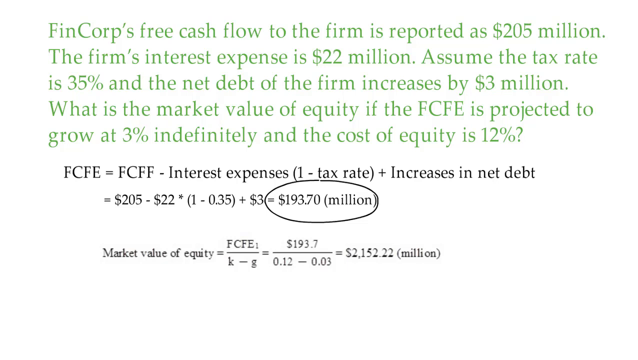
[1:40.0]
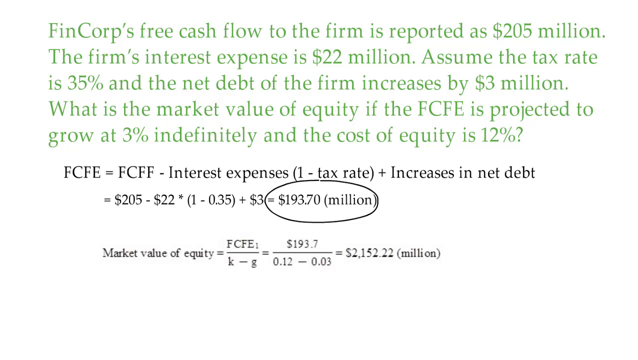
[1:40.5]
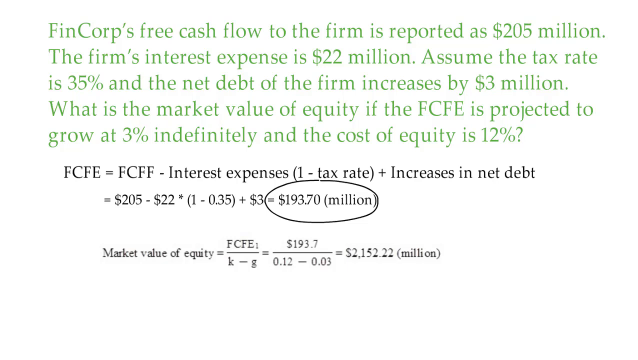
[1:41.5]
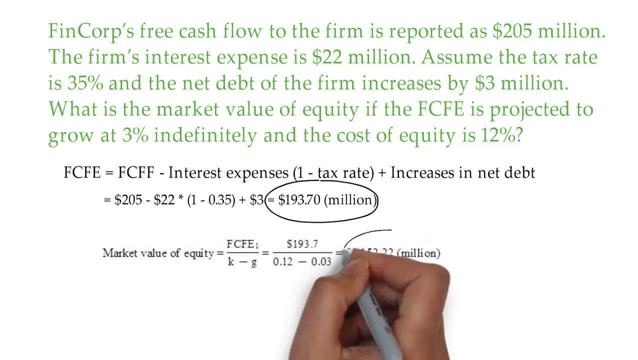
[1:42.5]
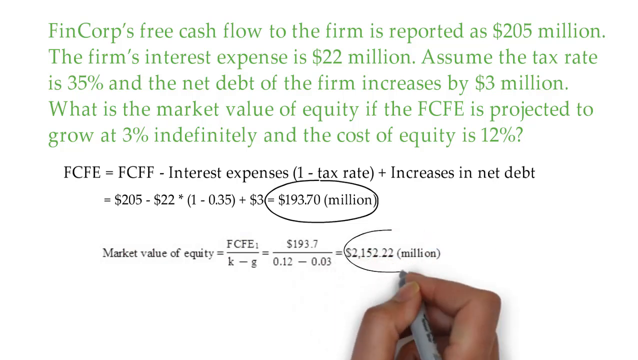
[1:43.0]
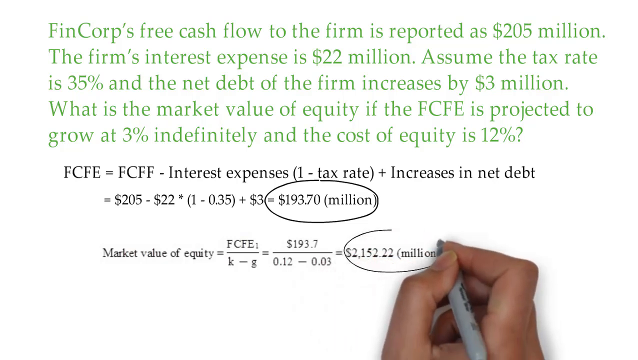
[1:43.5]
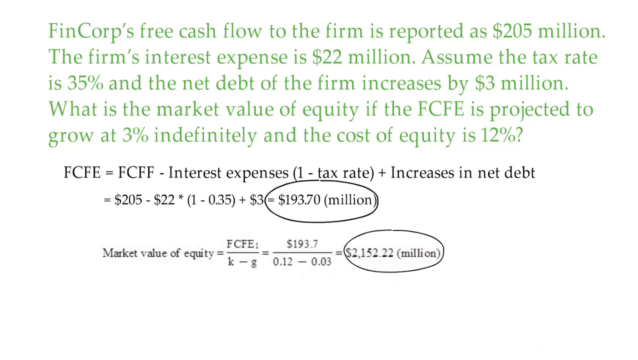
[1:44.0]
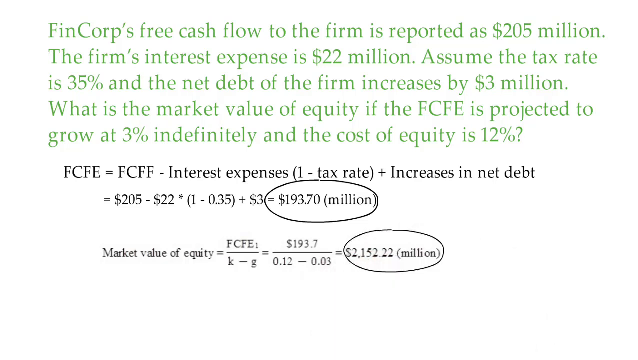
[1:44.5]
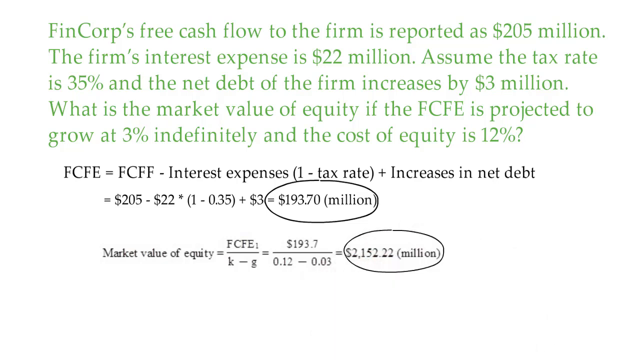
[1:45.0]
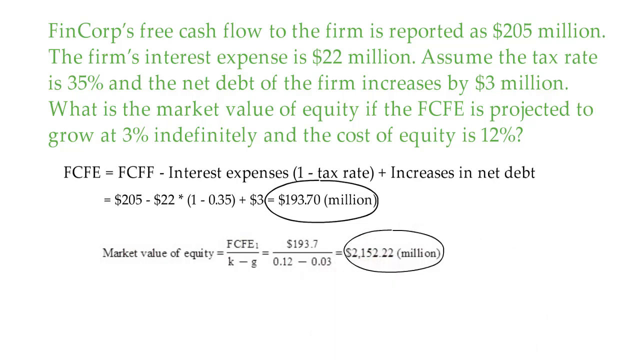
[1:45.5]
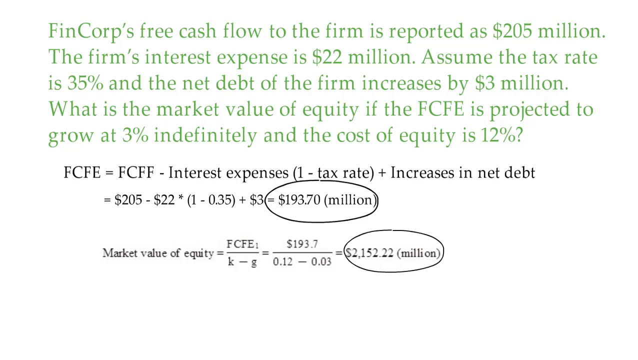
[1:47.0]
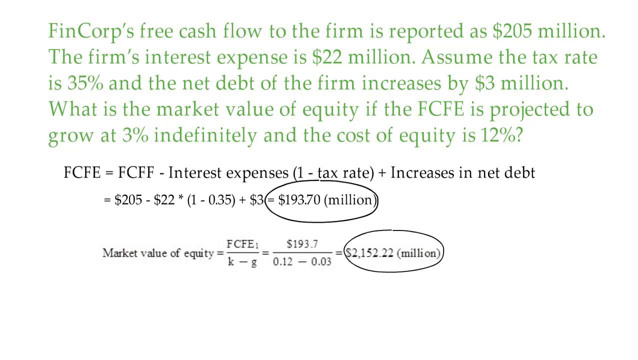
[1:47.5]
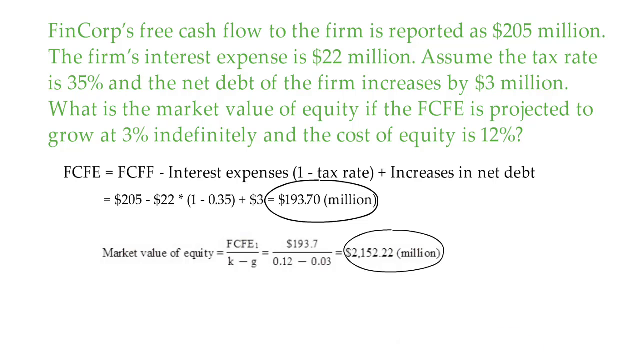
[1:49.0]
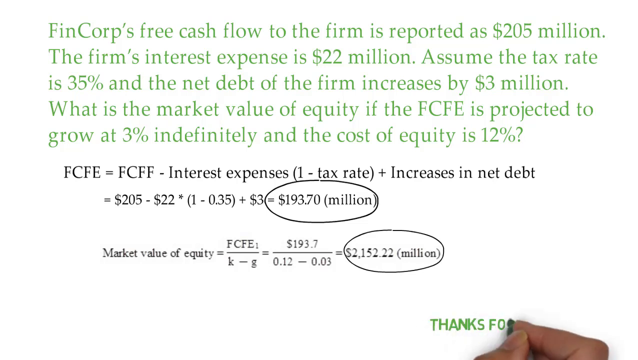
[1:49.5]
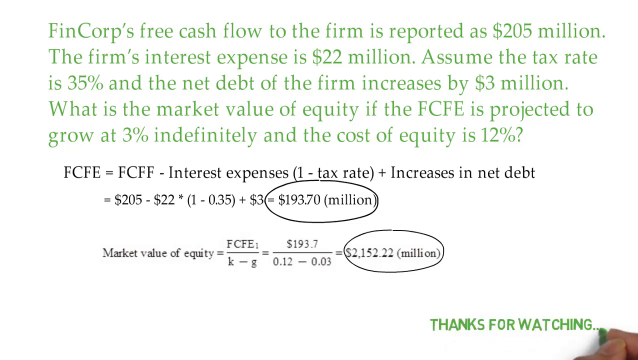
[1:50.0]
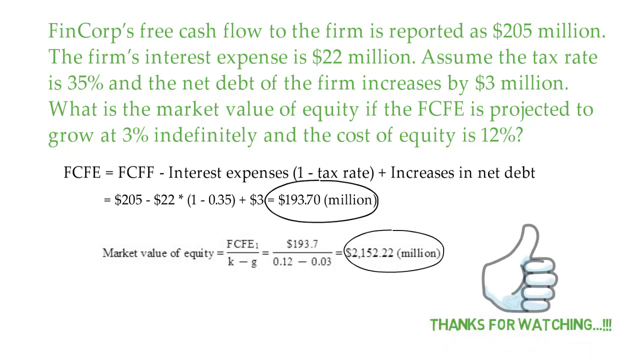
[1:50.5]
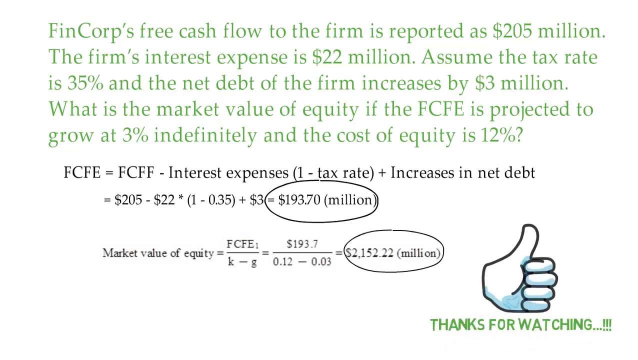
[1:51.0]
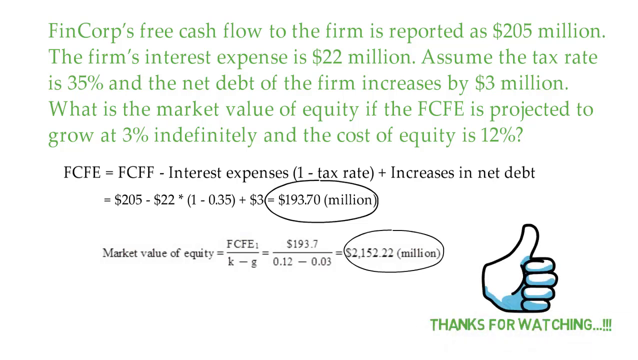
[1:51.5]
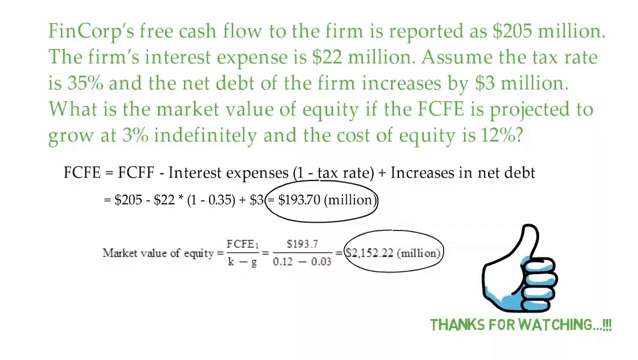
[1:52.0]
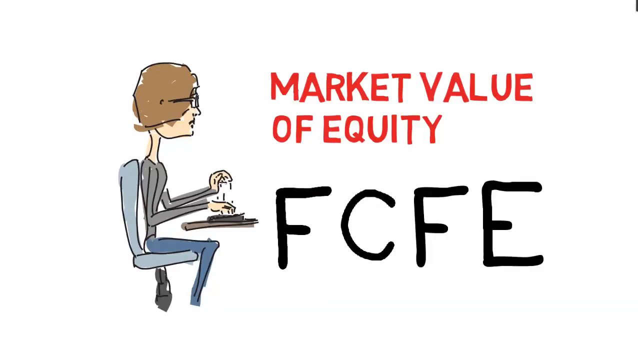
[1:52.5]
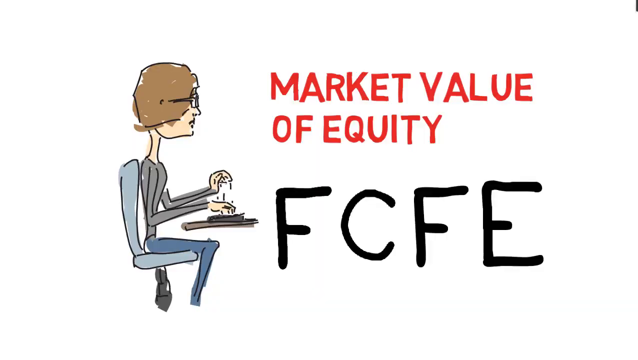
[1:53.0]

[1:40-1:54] On a white background, a paragraph of green text at the top of the screen says: "FinCorps free cash flow to the firm is reported as 205 million the firm's interest expense is 22 million Assume the tax rate is 35% and the net debt of the firm increases by 3 million What is the market value of equity if the FCFE is projected to grow at 3% indefinitely and the cost of equity is 12%". Black text under it says "FCFE equals FCFF minus interest expenses 1 minus tax rate plus increases in net debt equals 205 minus 22" with an asterisk, then "1 minus 0.35" in parentheses, "plus 3 dollars equals 193.70 million". Smaller text at the bottom says "market value of equity equals FCFE 1 divided by K minus G equals 193.7 divided by 0.12 minus 0.03 equals 2152.22 million". A hand comes up on the screen and circles the 2152.22 million. The hand then comes on the screen with a green marker and writes "thanks for watching...!!!" with a thumbs up. The video then goes to a screen showing a person with glasses sitting on a chair at a desk, typing on a keyboard, with red and black text that says "market value of equity FCFE".